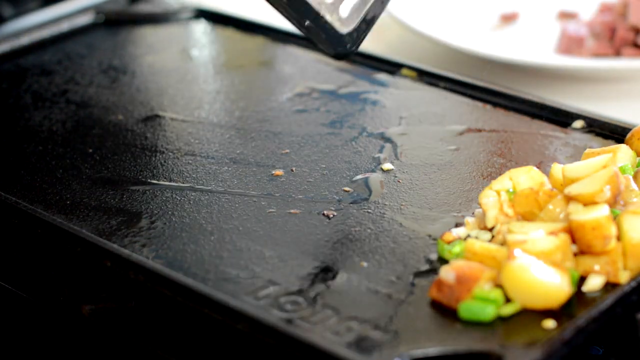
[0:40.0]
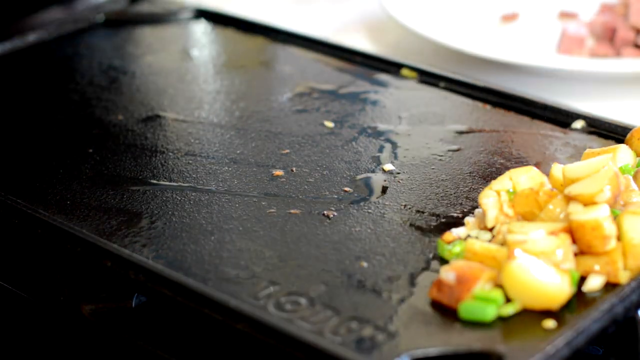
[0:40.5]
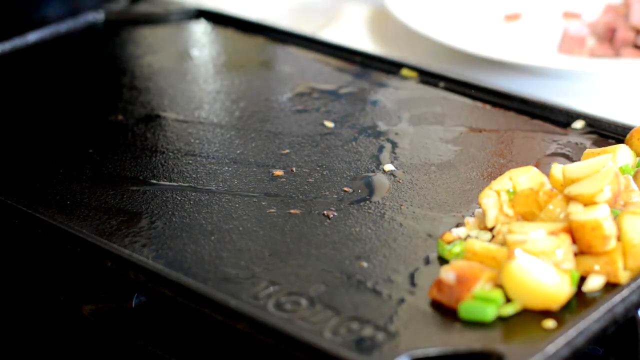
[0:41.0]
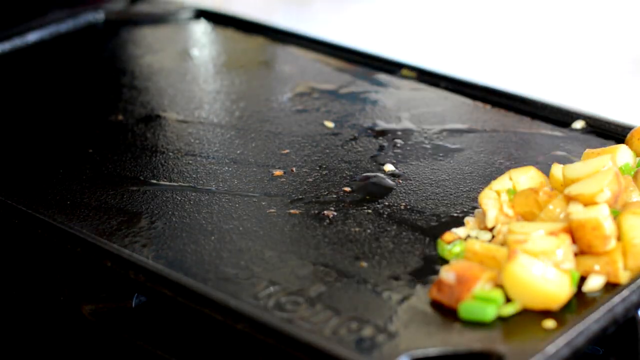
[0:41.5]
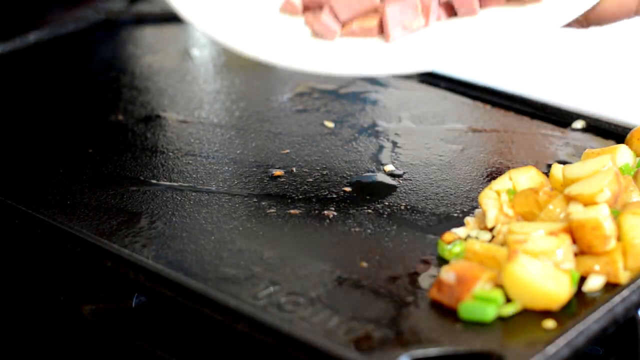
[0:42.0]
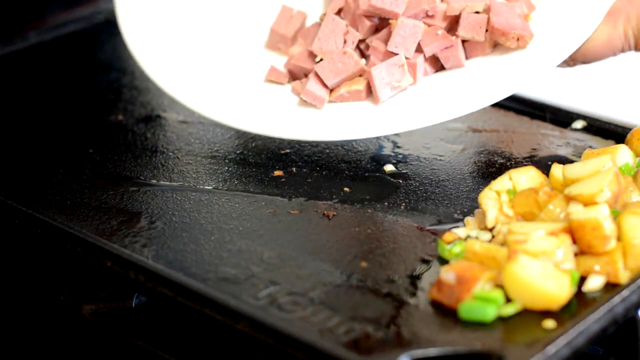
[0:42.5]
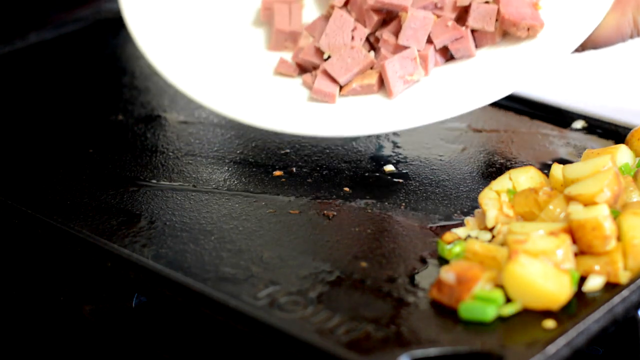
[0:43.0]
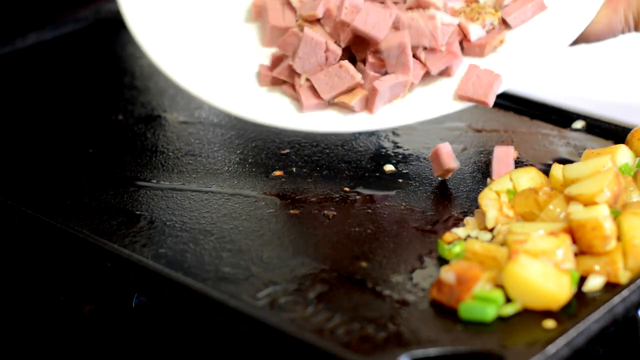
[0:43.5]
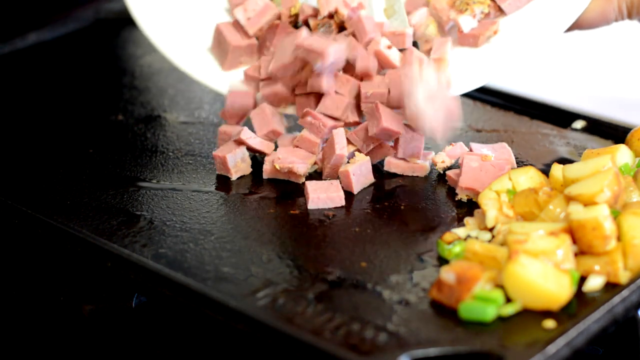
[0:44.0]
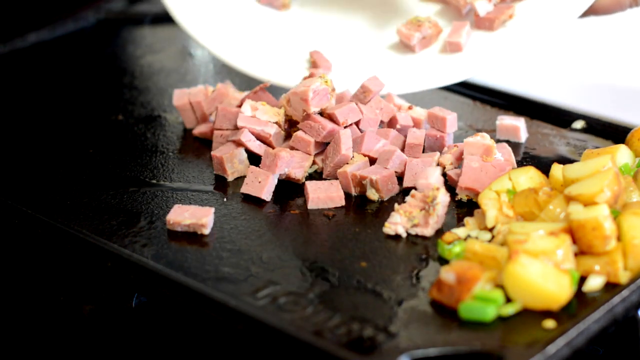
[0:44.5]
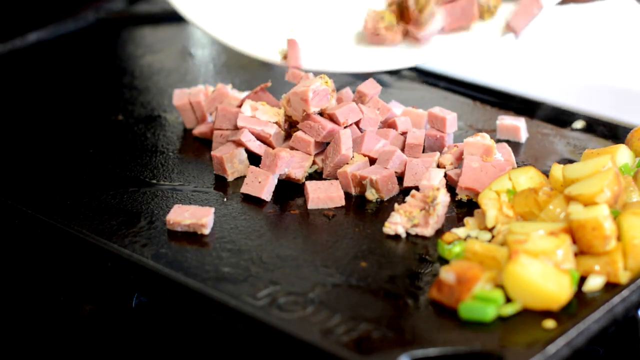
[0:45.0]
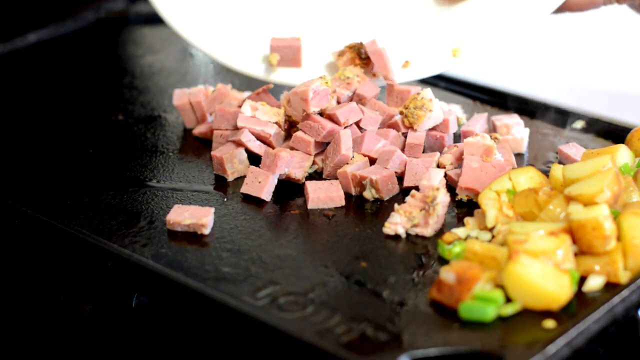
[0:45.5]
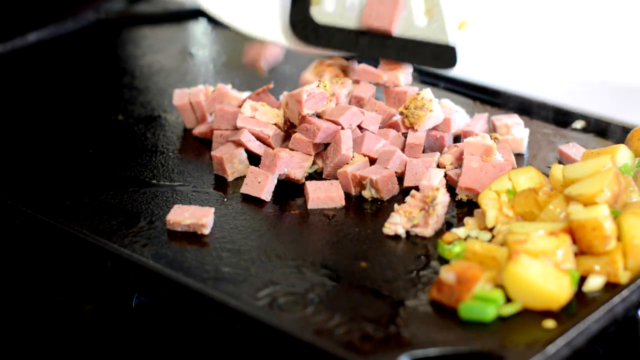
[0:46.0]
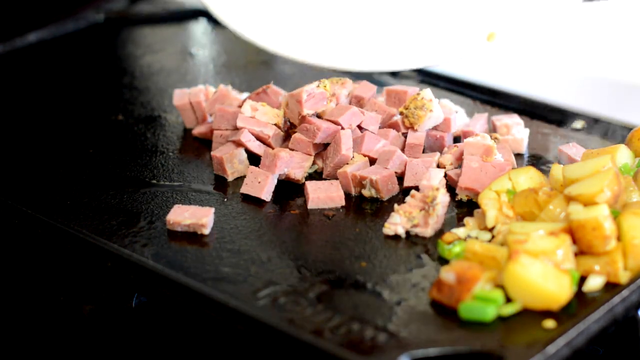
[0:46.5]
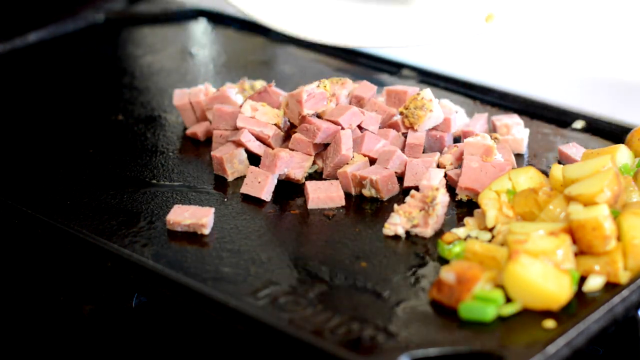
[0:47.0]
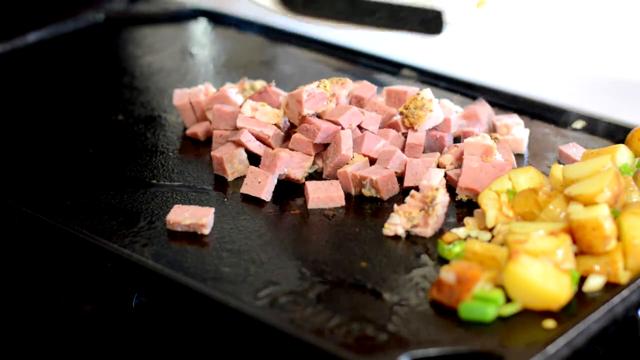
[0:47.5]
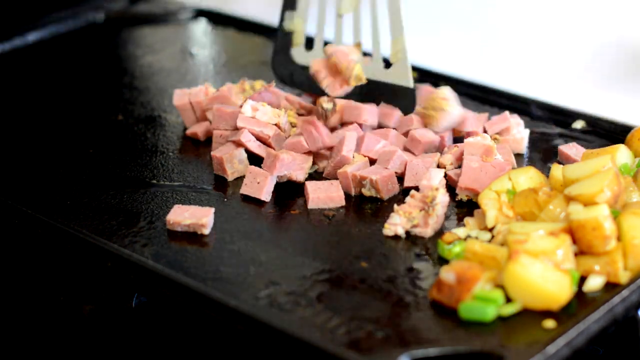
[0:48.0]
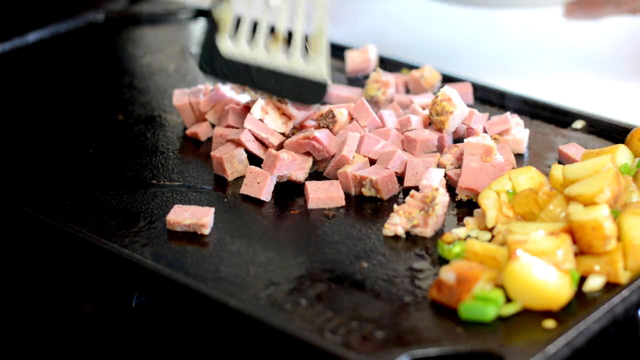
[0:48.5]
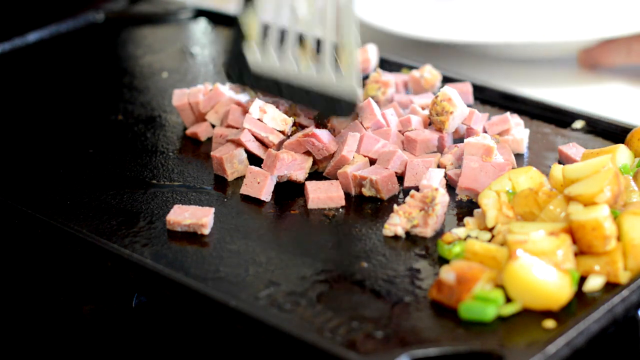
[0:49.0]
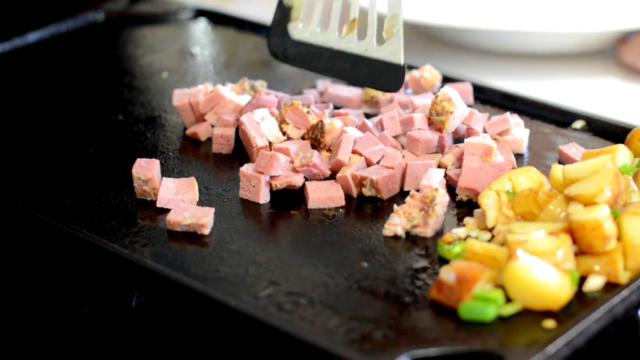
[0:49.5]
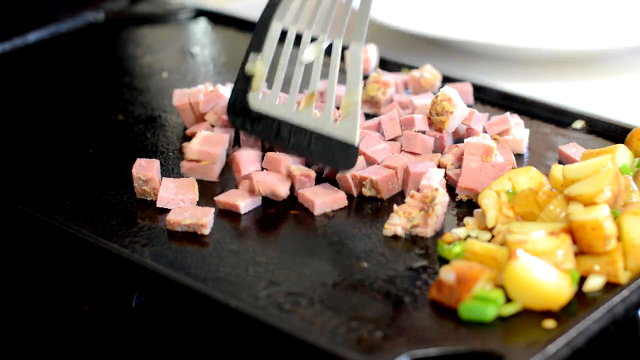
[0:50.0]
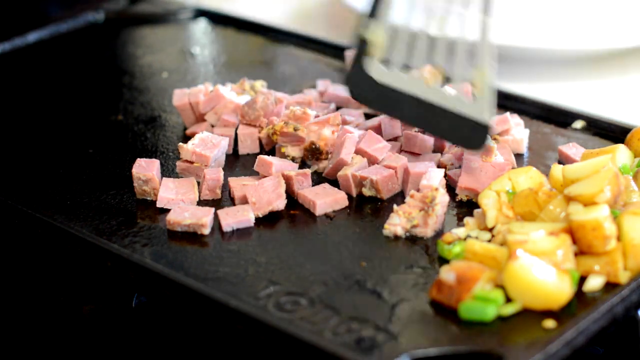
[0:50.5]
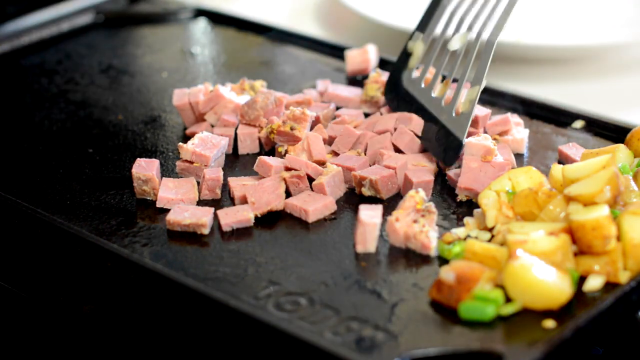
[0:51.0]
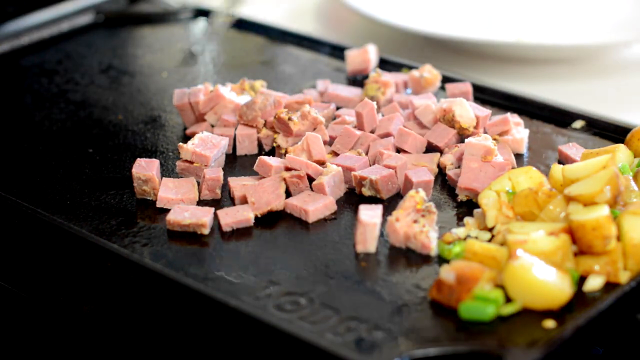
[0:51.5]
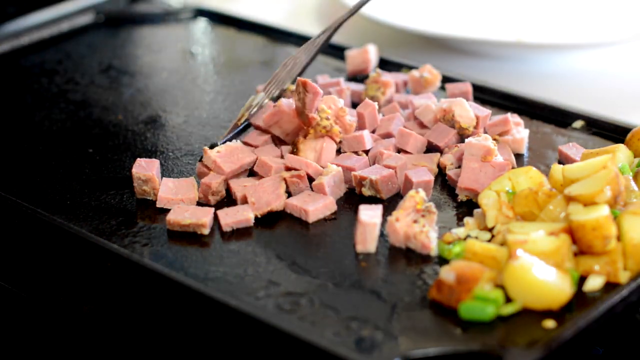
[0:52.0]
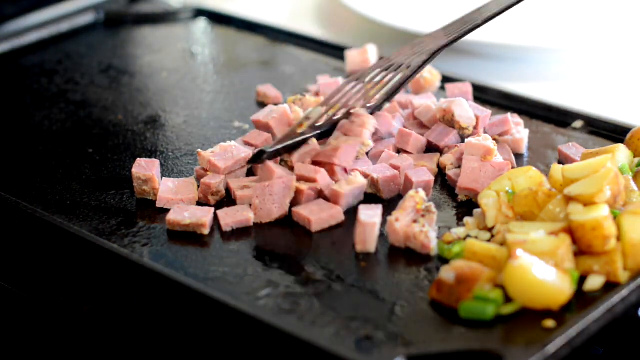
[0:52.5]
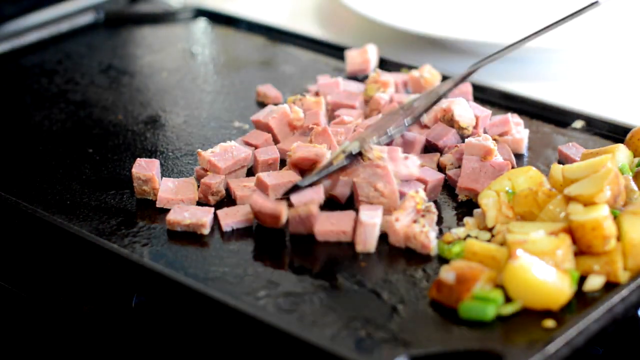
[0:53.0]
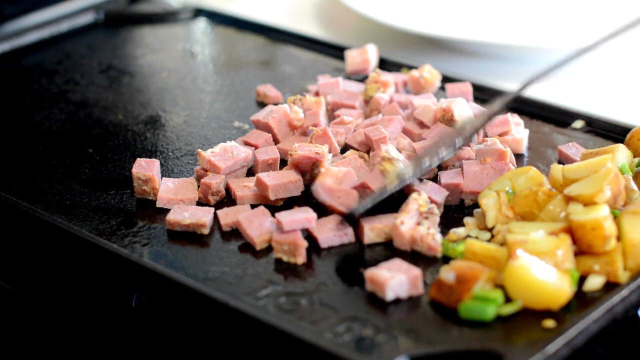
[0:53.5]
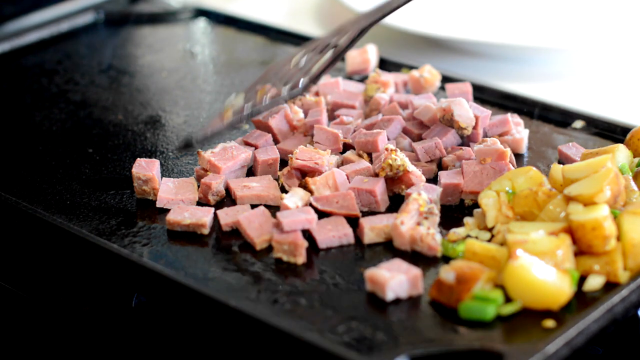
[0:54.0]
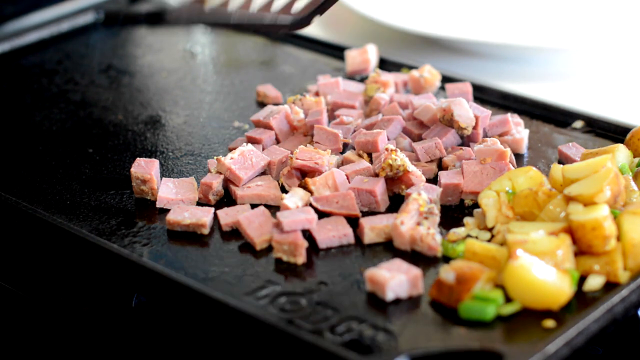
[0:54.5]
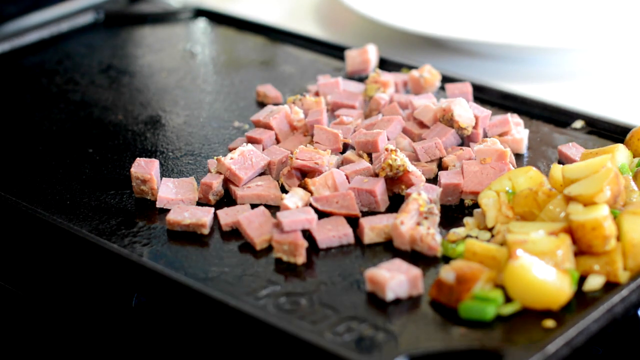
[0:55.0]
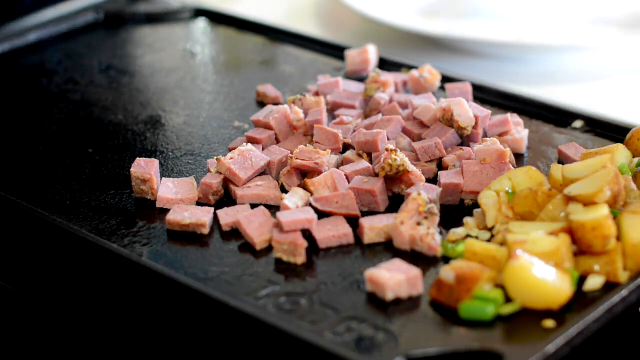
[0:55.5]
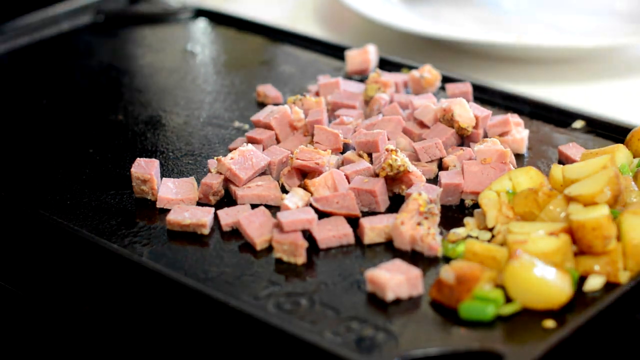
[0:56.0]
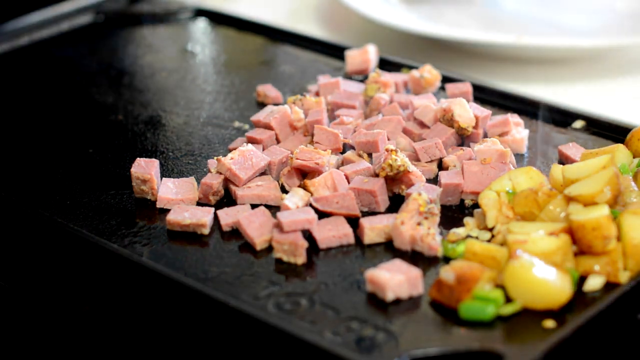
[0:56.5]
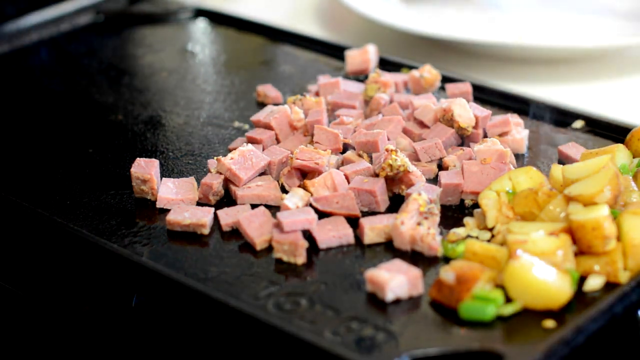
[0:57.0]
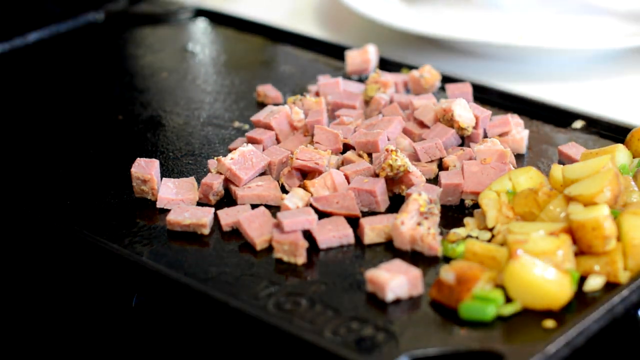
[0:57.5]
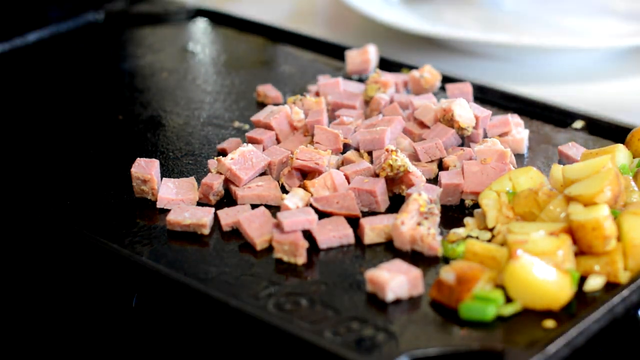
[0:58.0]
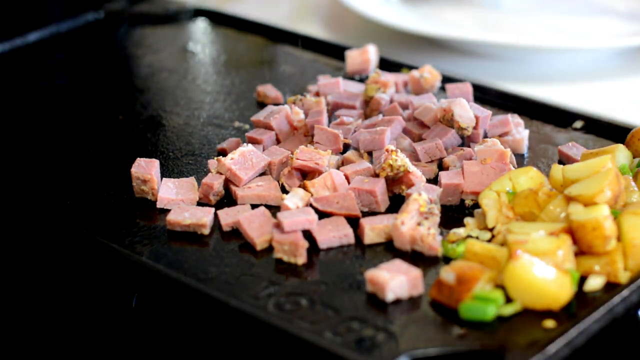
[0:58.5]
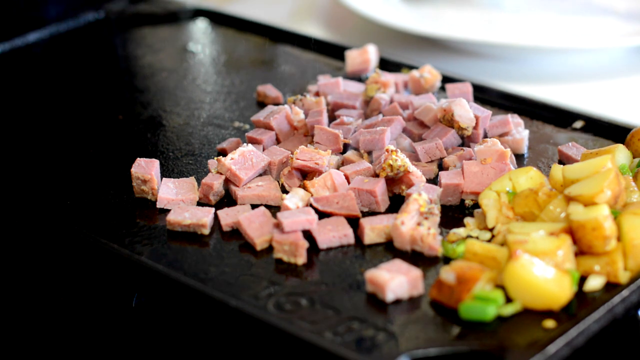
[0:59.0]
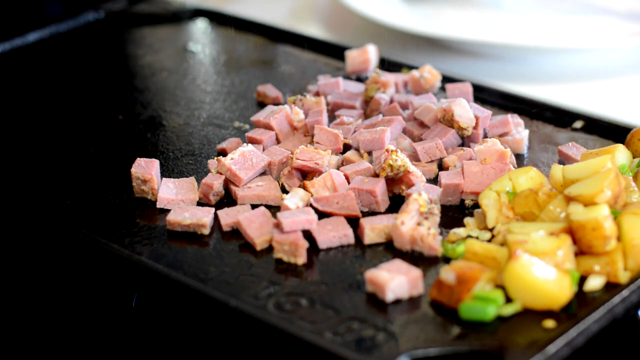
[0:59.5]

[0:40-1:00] A flat black grill has some oil on it, with potatoes and vegetables over on the right edge. A spatula hovers over the grill, and a blurred white plate with some meat on it is in the background. The spatula moves down and taps on the grill, then the white plate hovers over the grill and very small cubes of what look to be ham are pushed delicately from the plate onto the grill, several times, to start cooking. The spatula moves the meat around quite a few times, pushing it back and forth near the potatoes, and smoke comes off the meat as it cooks on the grill.